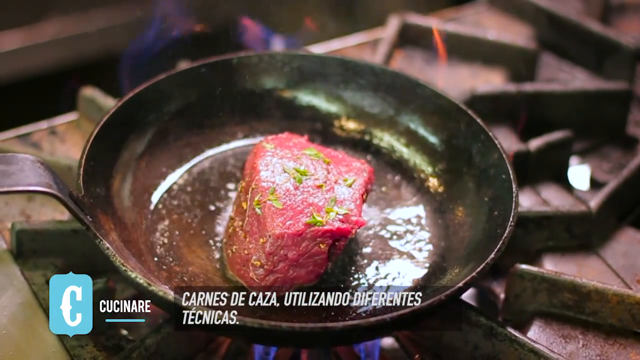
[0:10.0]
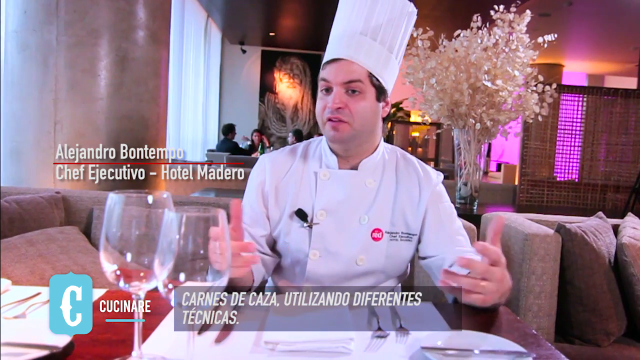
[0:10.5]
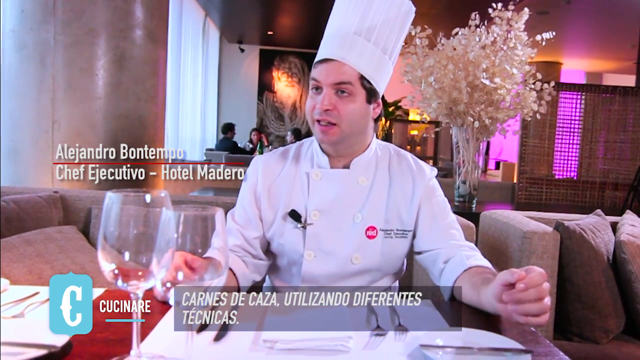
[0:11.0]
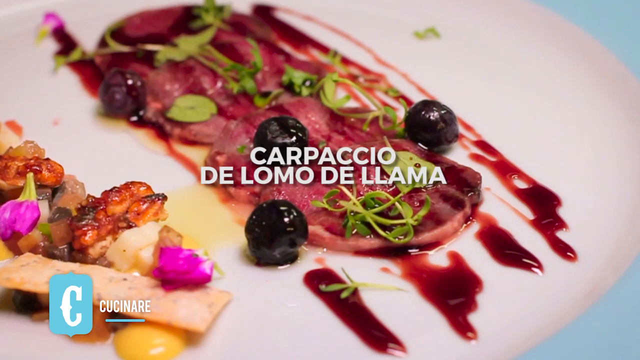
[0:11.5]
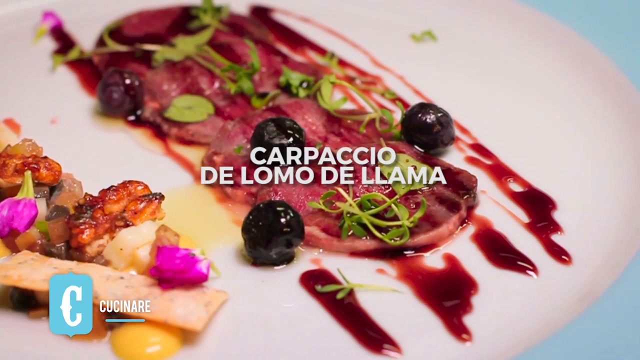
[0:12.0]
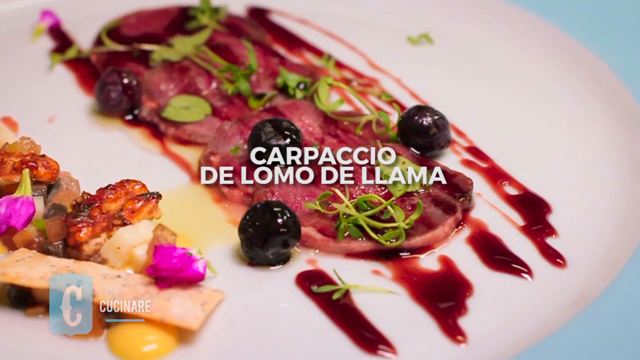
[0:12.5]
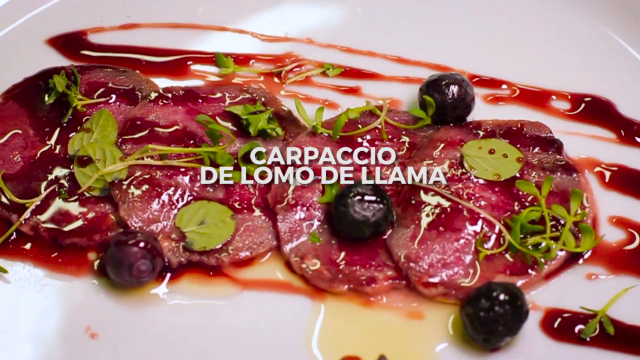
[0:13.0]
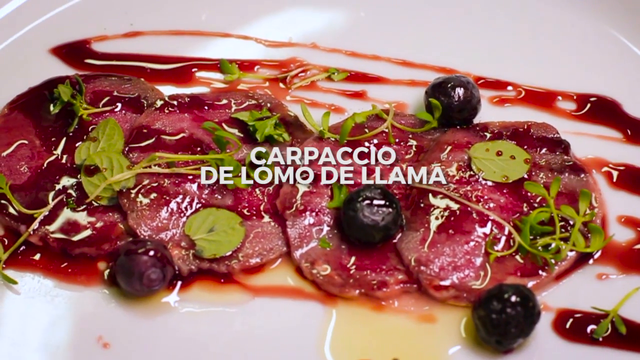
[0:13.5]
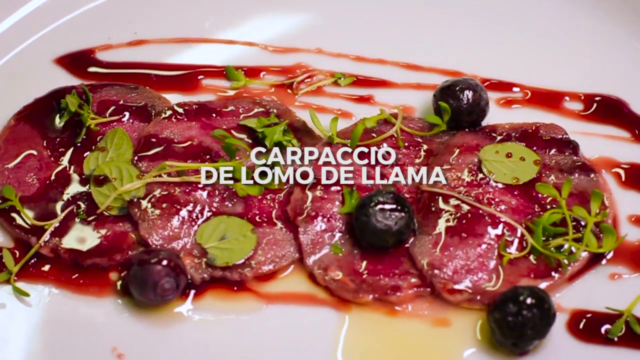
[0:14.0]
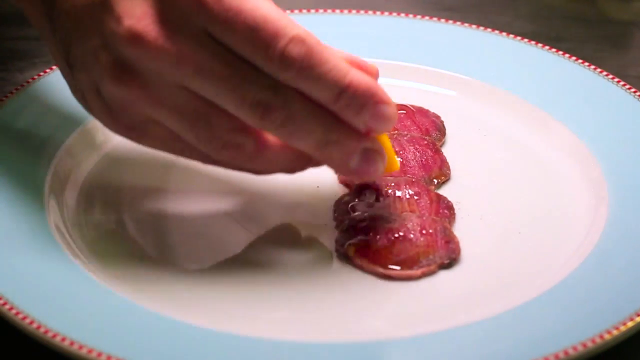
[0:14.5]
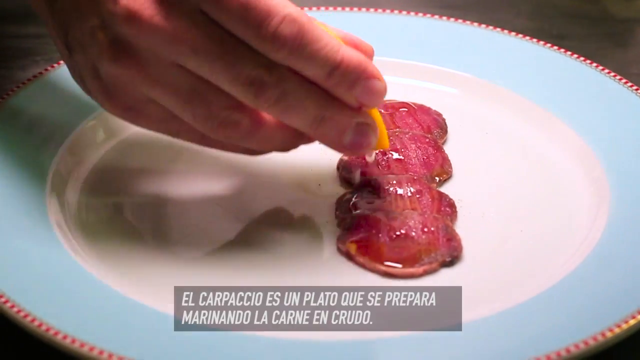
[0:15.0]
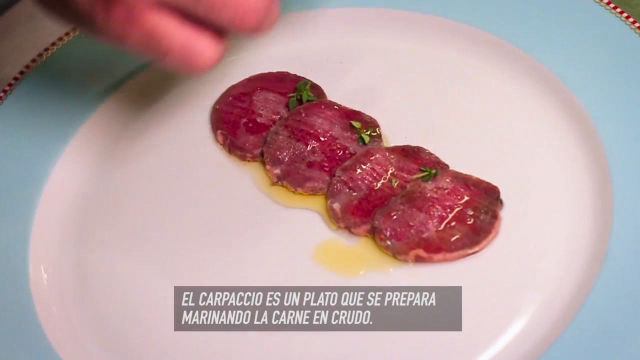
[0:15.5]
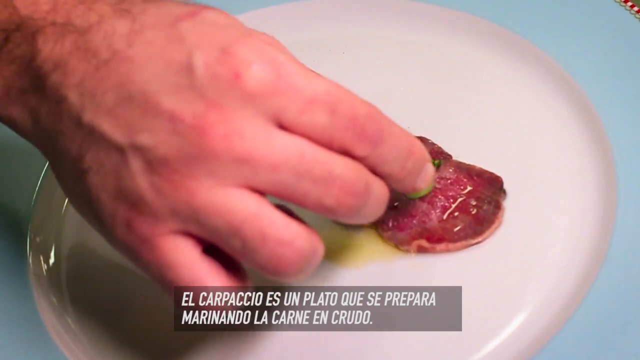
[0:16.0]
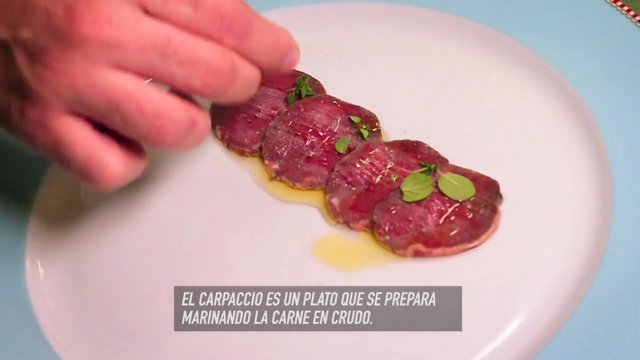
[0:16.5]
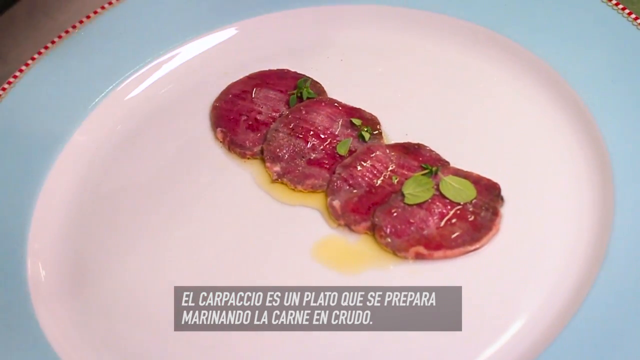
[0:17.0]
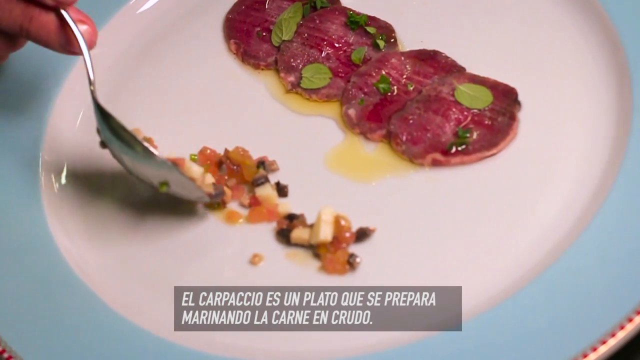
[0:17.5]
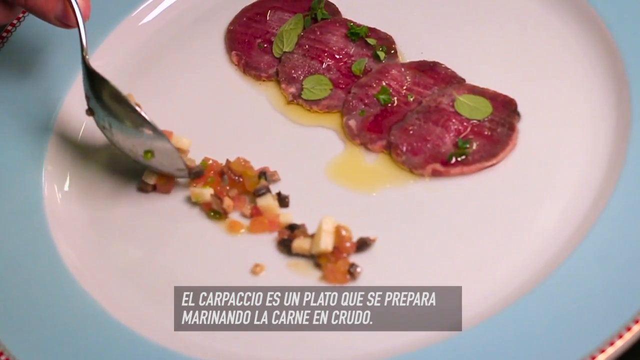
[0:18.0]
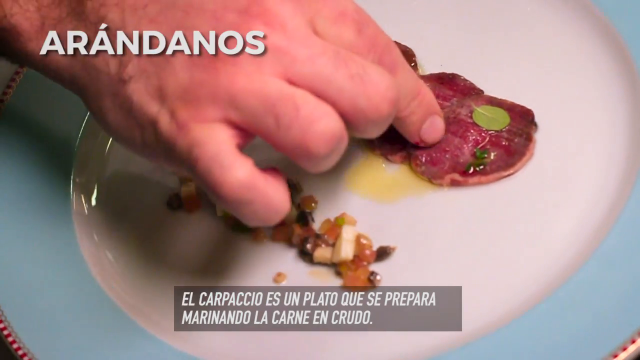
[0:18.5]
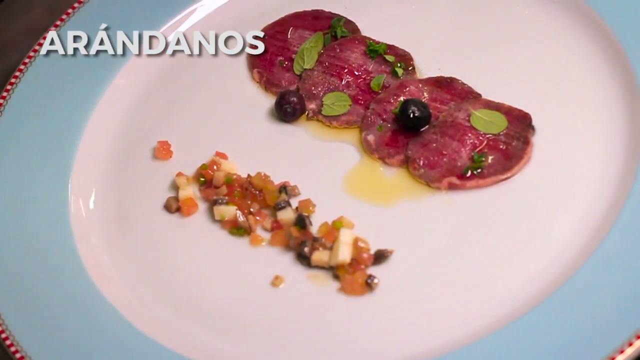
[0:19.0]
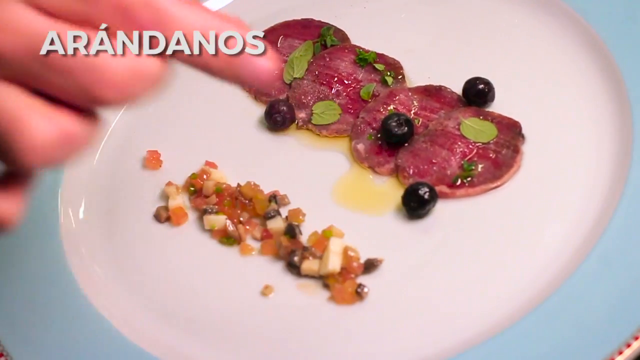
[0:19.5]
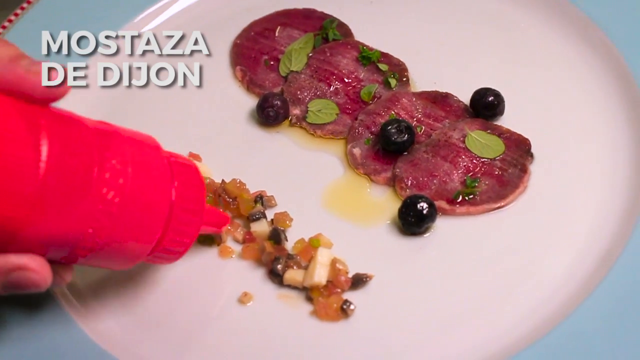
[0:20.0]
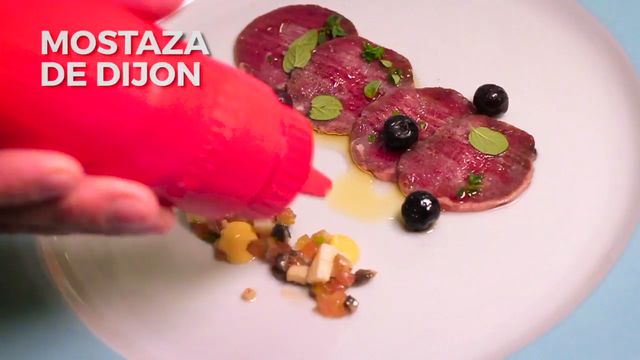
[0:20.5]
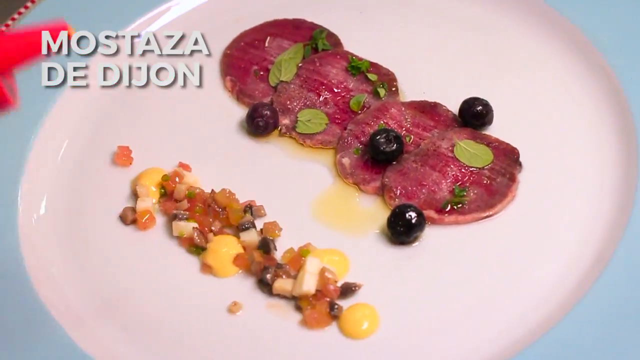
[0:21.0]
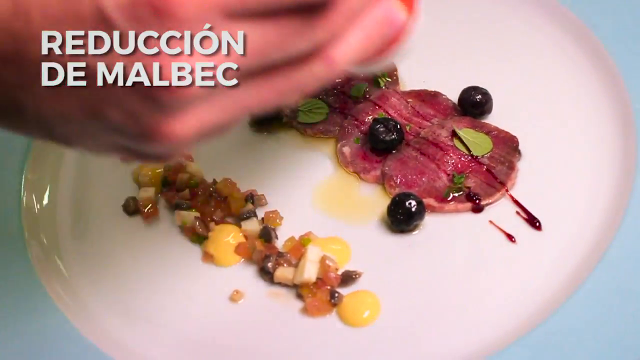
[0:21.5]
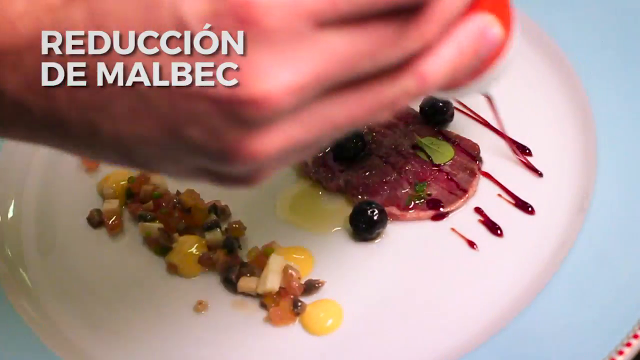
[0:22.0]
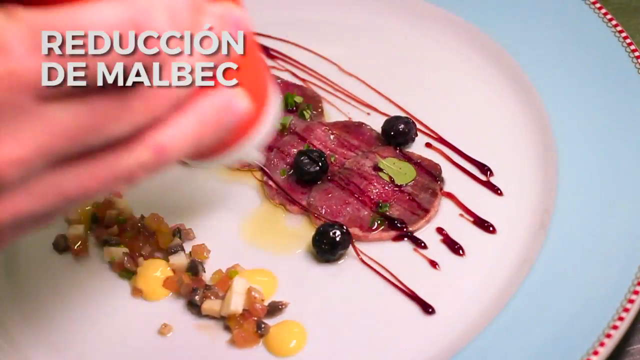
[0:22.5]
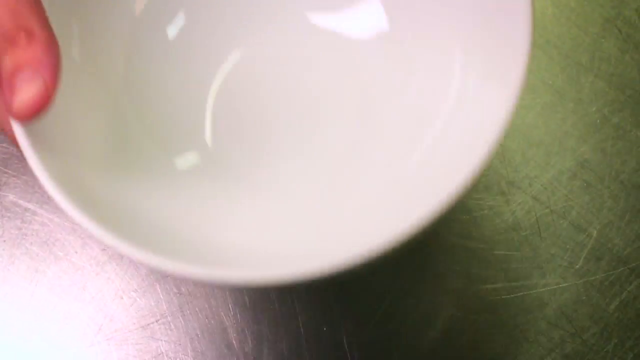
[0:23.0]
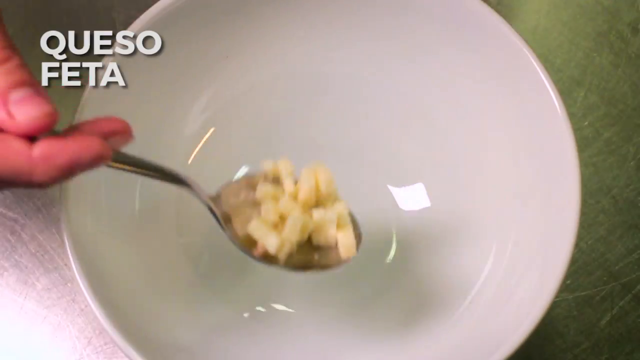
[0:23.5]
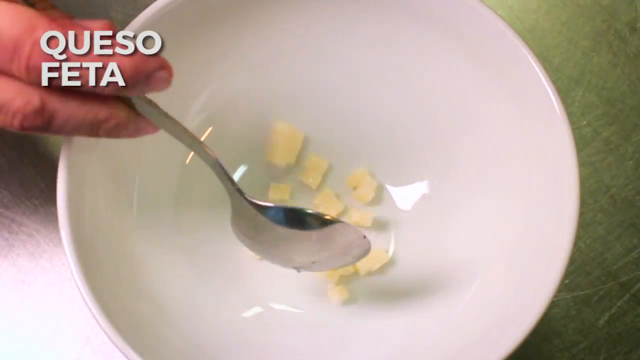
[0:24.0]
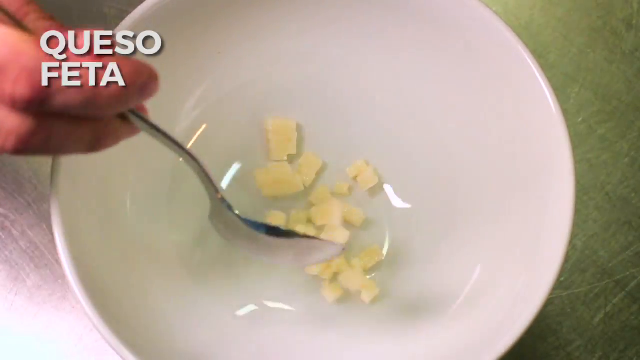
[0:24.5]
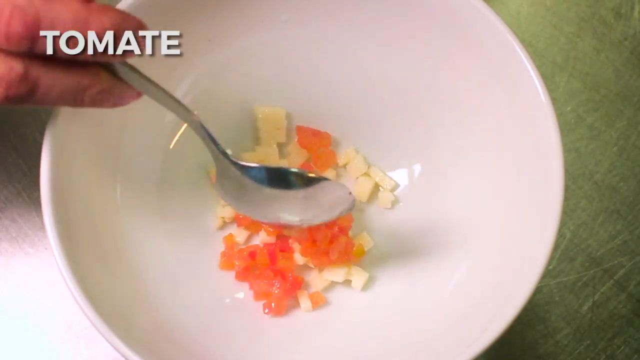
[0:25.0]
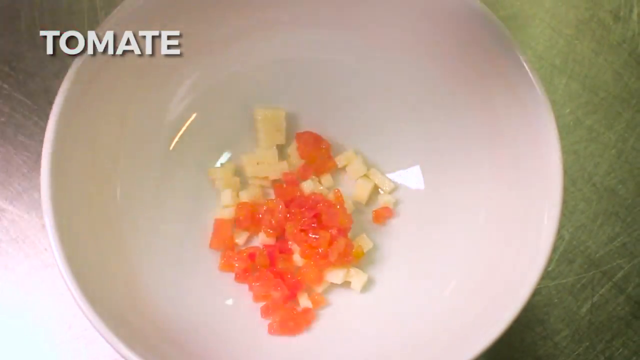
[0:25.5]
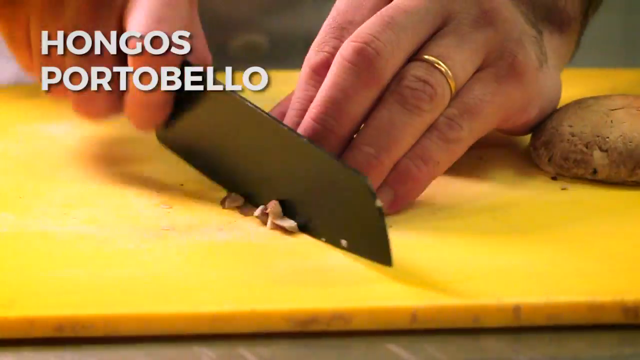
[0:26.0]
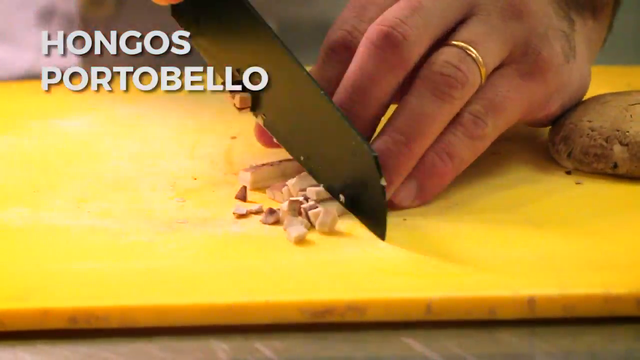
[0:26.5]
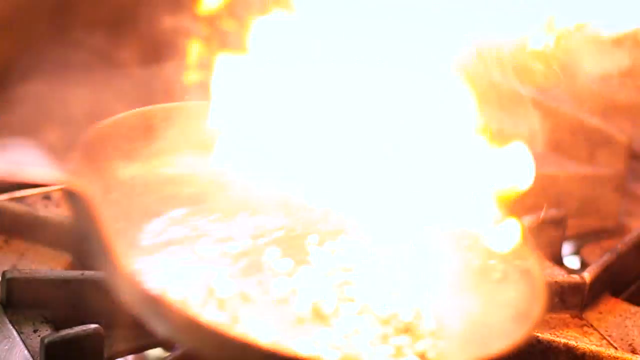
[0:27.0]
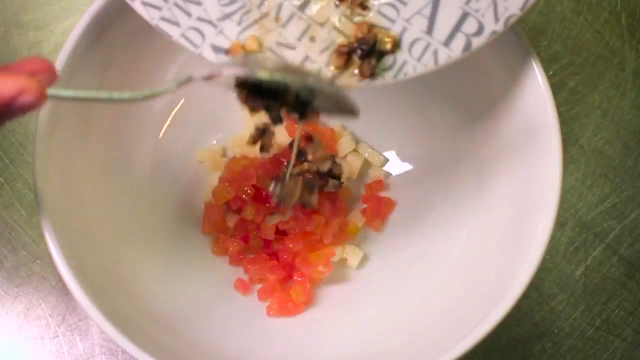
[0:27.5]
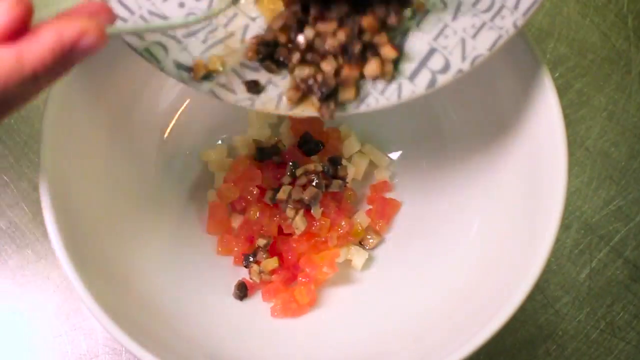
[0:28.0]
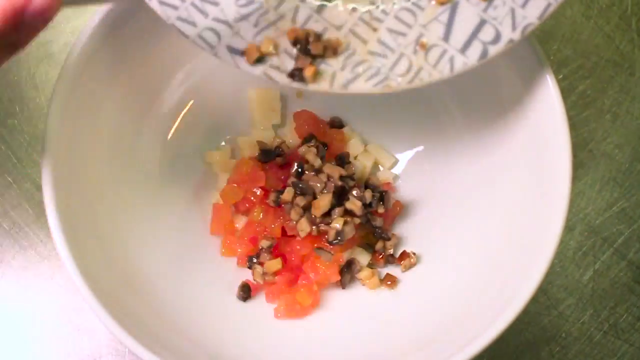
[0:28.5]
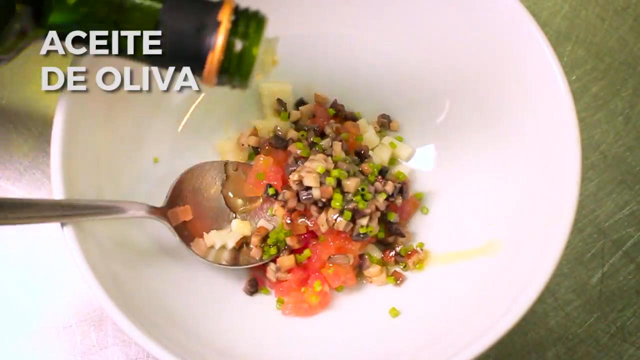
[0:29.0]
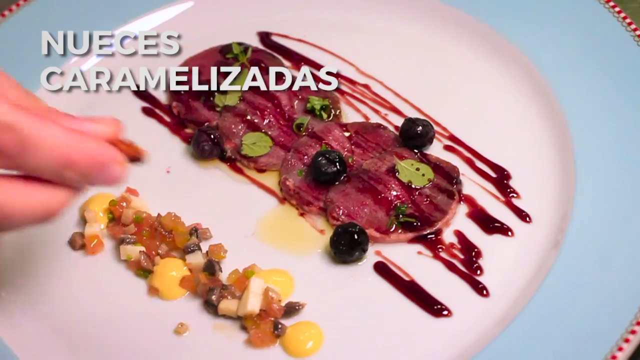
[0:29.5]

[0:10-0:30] The video cuts to a one-on-one interview with Alejandro Buentempo, an executive chef from Hotel Madero, who wears a chef hat, with Spanish subtitles below. After a few seconds the interview cuts to close-ups of beef carpaccio being plated. Thinly sliced beef or veal in round cuts is lined up, and the chef adds some kind of lemon juice over it and some garnish. The chef then decorates the plate, adding Dijon mustard and a Malbec reduction. In the next scene the chef adds feta cheese, tomato and chopped portobello mushrooms to a white bowl. He sautes everything in a pan, puts it back into the bowl, adds olive oil, and places the mixture next to the beef carpaccio.